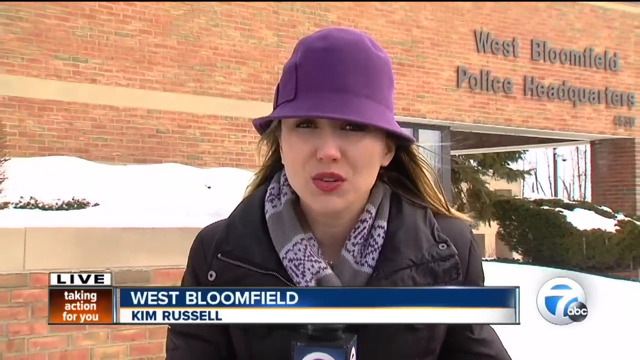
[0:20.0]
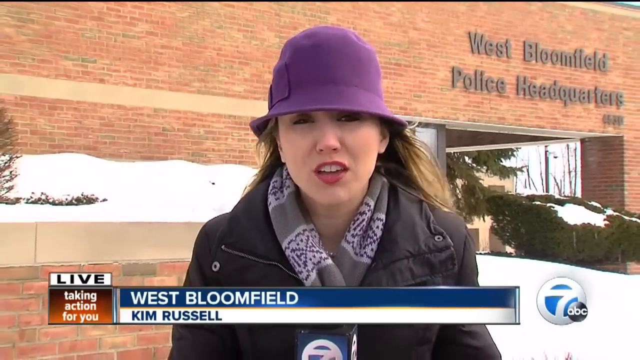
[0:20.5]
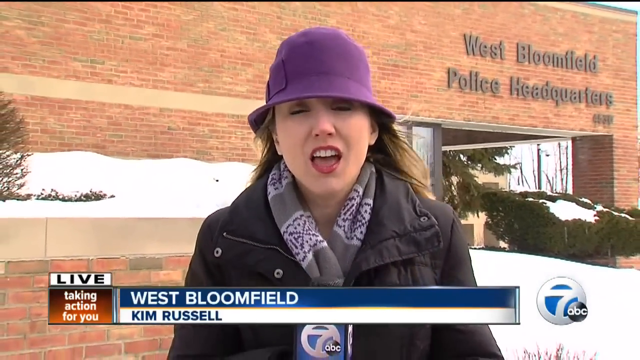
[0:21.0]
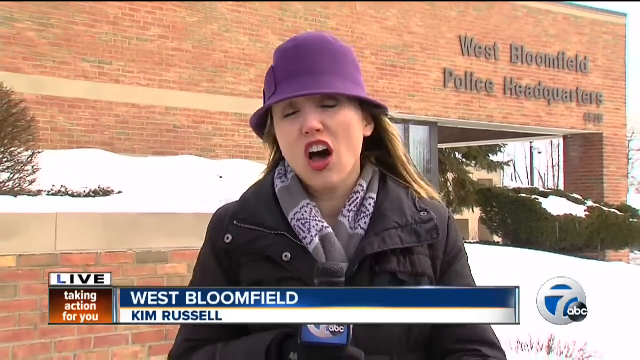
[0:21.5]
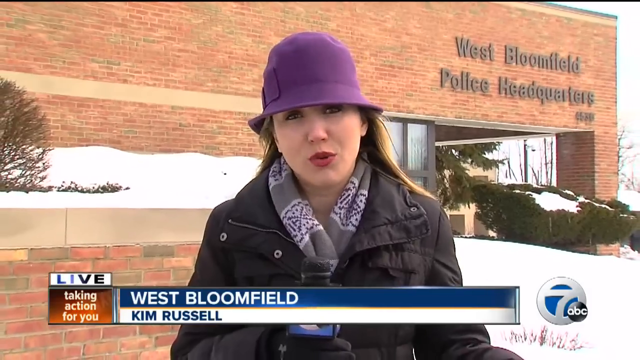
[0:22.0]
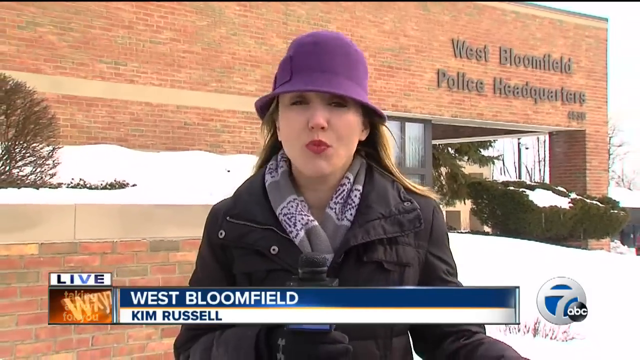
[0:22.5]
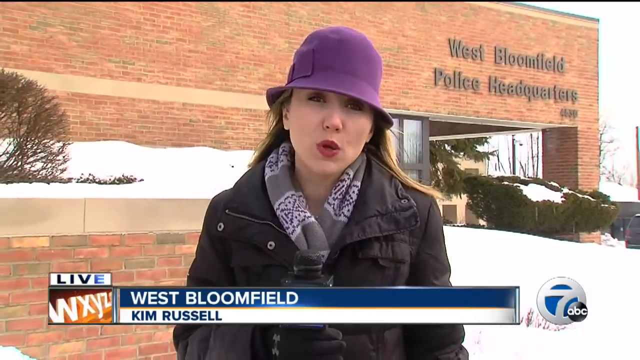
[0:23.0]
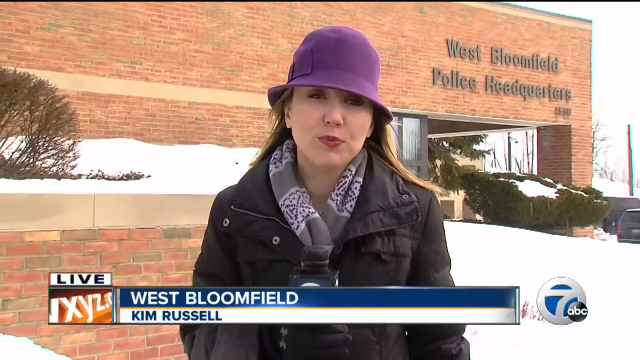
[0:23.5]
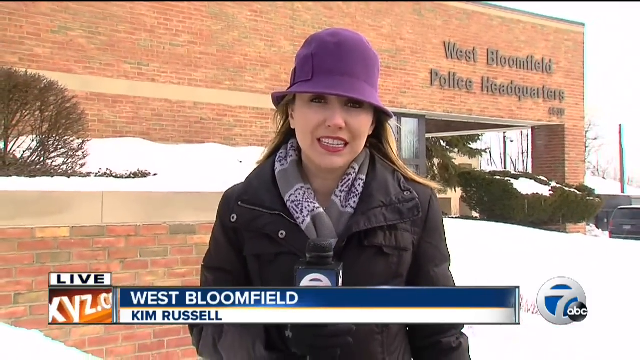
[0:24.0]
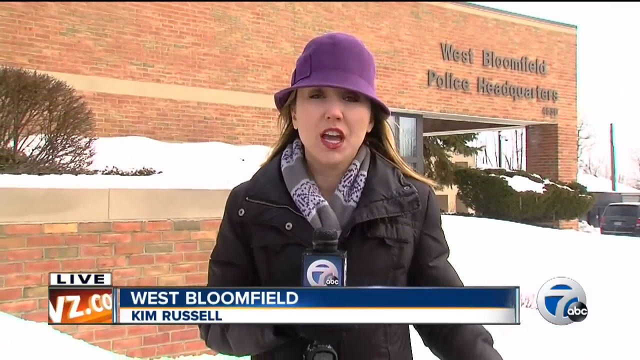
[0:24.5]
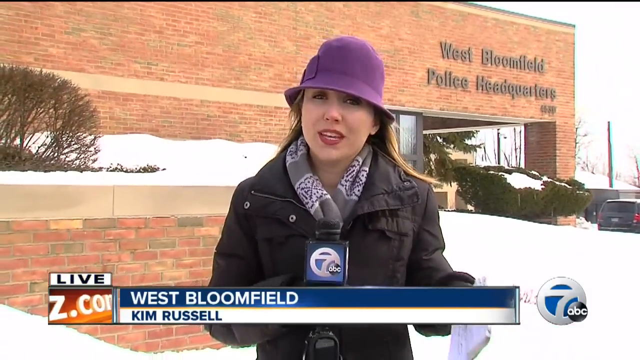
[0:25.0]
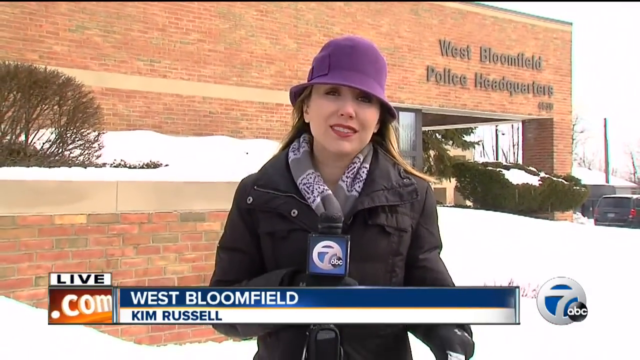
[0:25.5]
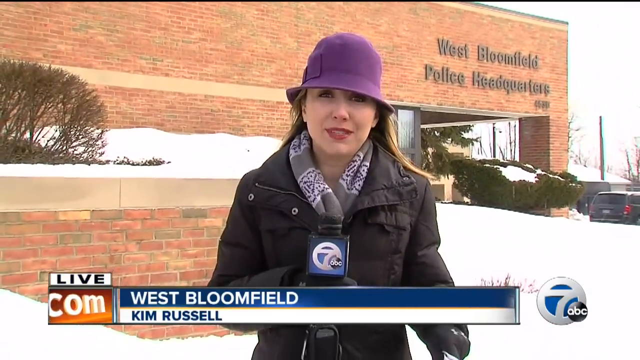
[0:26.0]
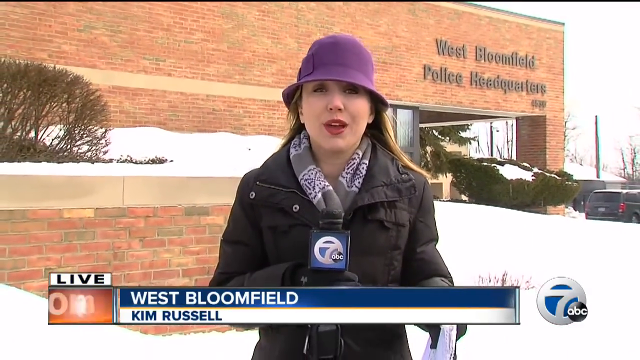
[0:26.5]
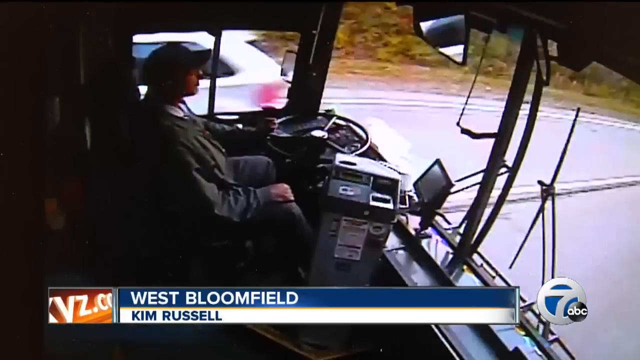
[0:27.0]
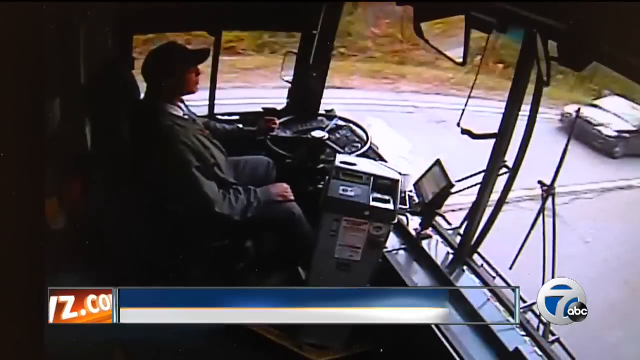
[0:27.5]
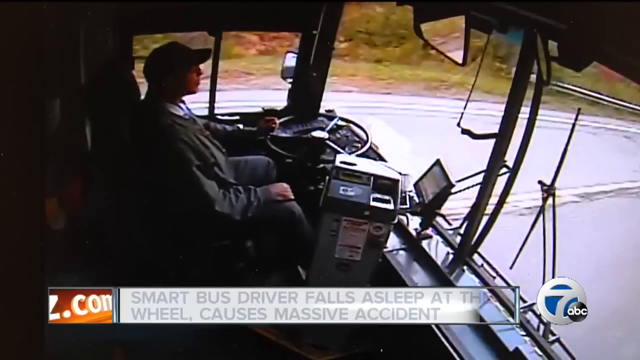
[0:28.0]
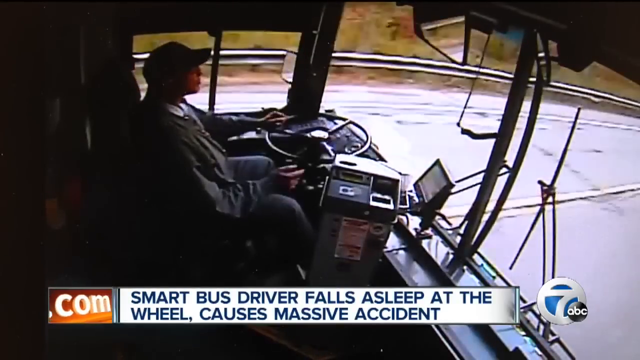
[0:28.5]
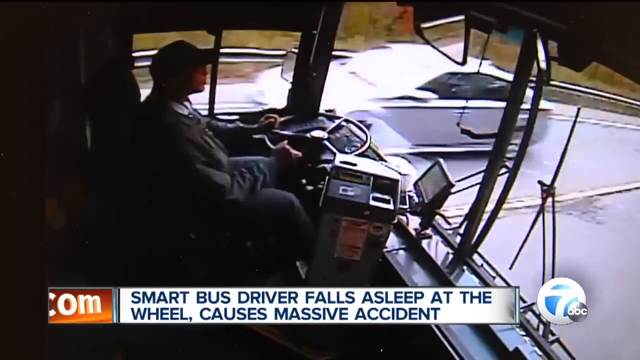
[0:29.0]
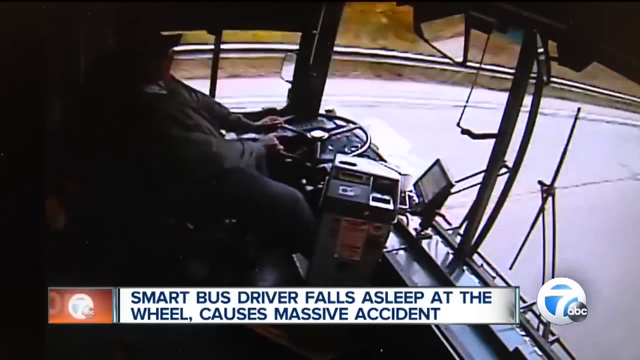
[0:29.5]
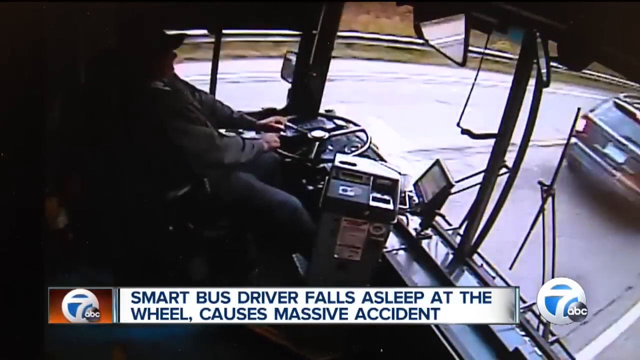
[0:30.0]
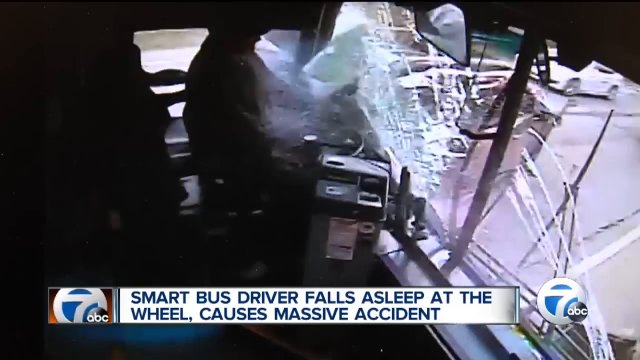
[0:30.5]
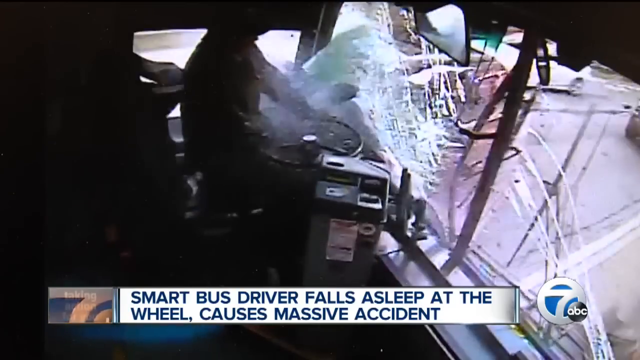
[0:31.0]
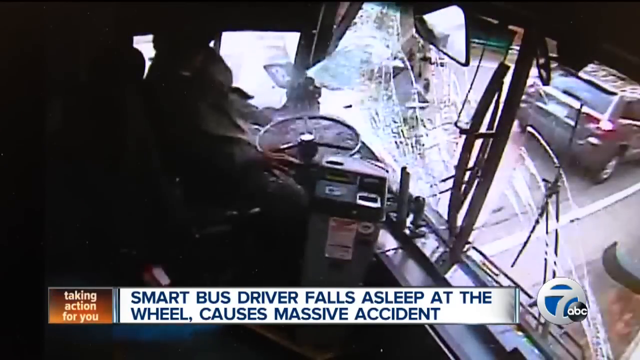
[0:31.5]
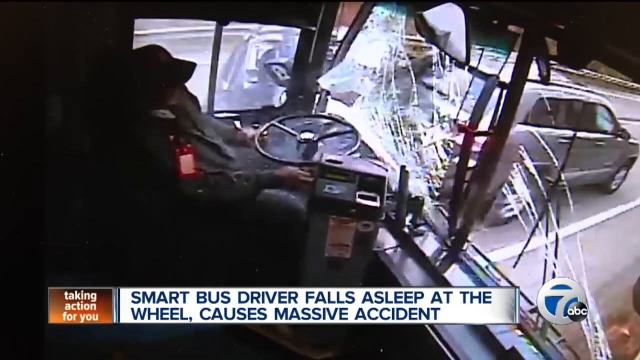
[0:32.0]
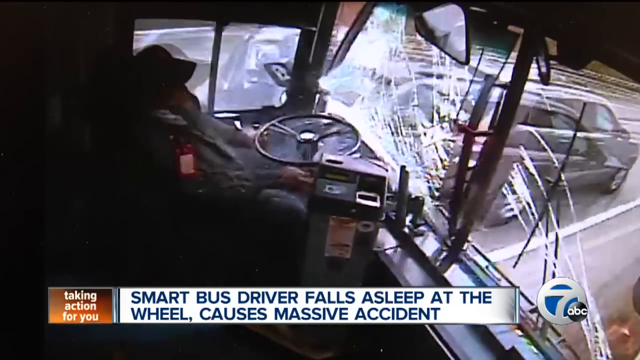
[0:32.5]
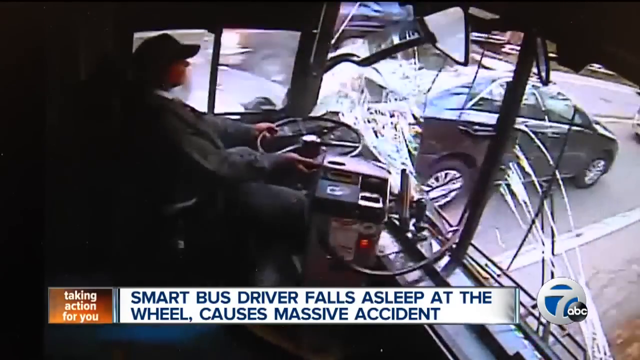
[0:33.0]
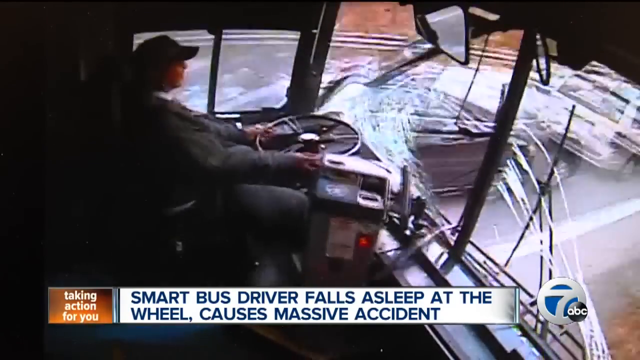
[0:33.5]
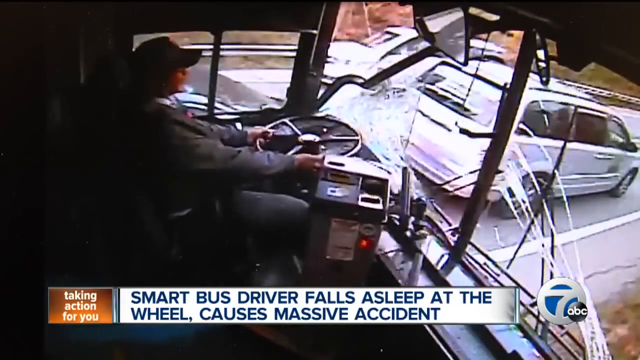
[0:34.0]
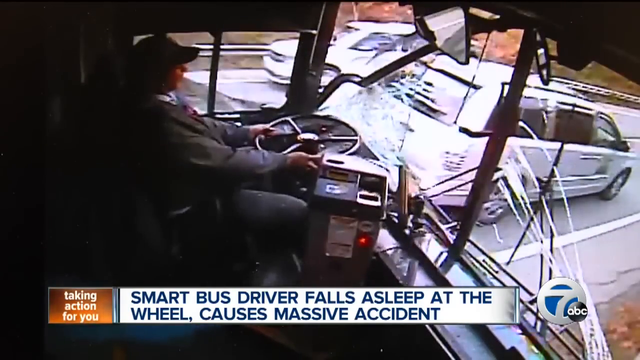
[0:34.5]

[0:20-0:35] Reporter Kim Russell speaks into the camera. The video then segues to footage of a bus driver, with text reading "smart bus driver falls asleep at the wheel, causes massive accident." The footage appears to be taken by a camera inside the bus and shows the driver apparently falling asleep before the accident. The windshield glass smashes and the driver goes forcefully into the glass at impact from the other vehicle. The footage looks violent and appears to be in slow motion. "Live" is shown at the bottom left, and the chyron describes the action. The driver wears kind of a hat, gray slacks and a gray jacket; it is not apparent whether it is a school bus or a transit bus.